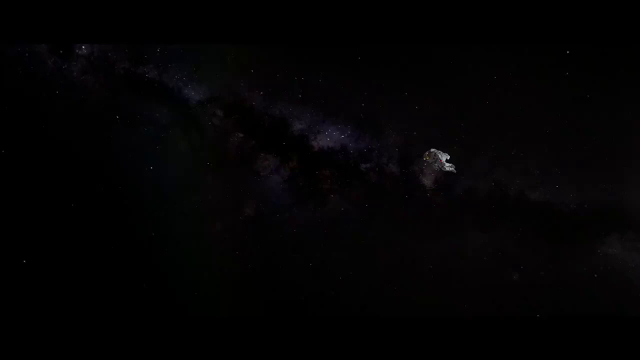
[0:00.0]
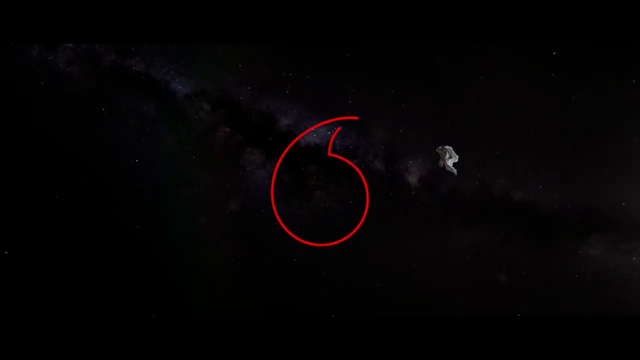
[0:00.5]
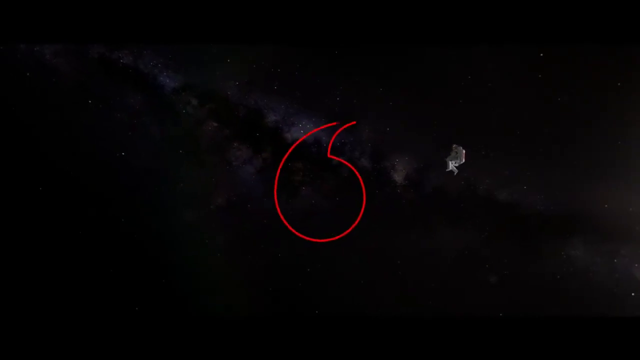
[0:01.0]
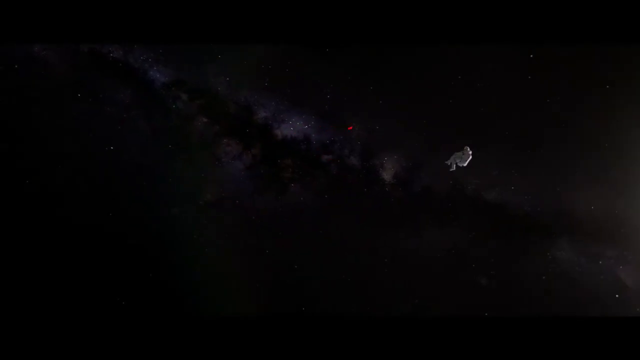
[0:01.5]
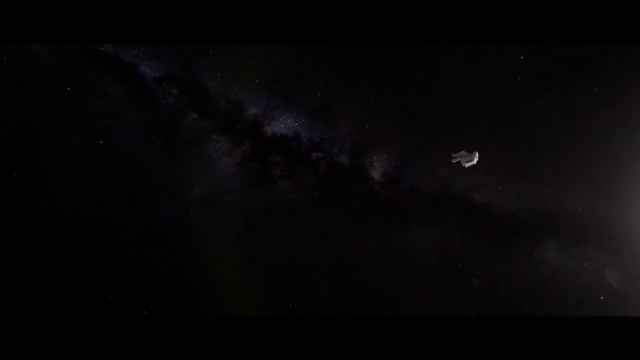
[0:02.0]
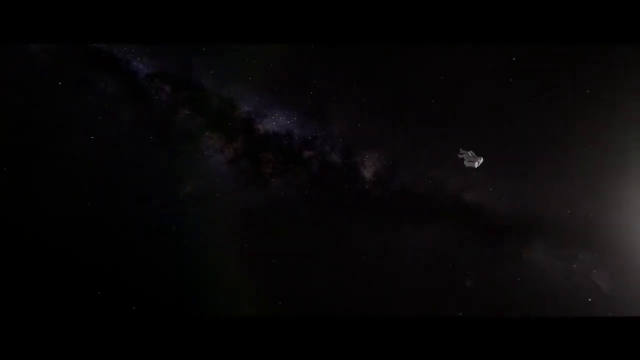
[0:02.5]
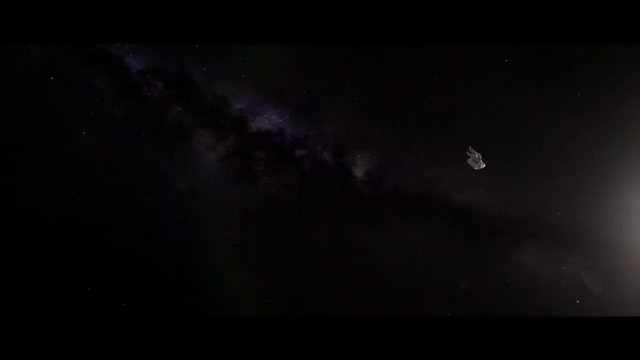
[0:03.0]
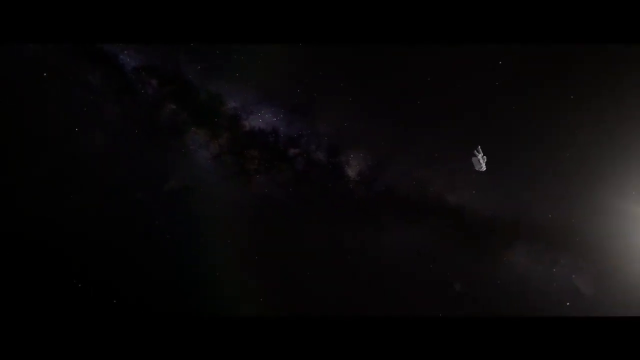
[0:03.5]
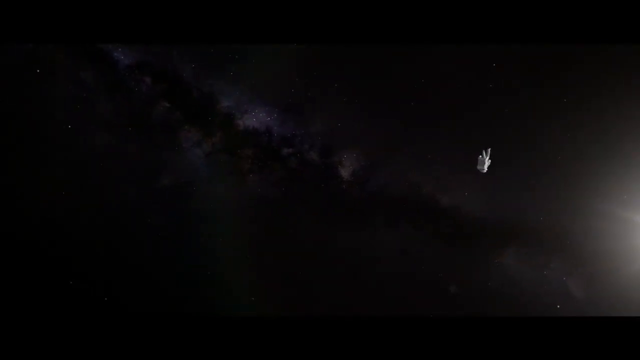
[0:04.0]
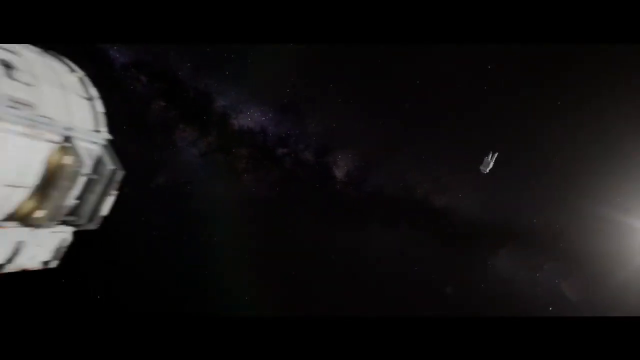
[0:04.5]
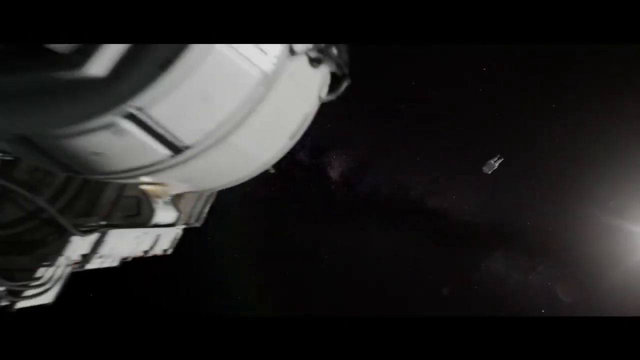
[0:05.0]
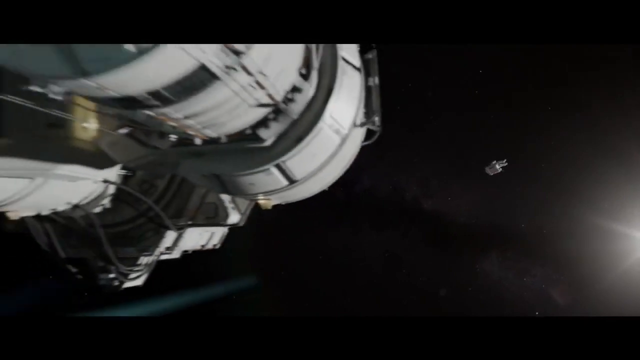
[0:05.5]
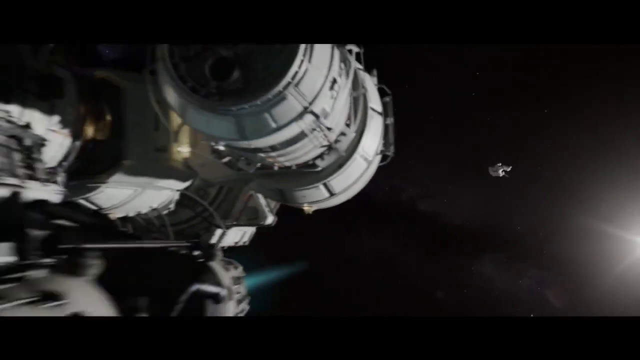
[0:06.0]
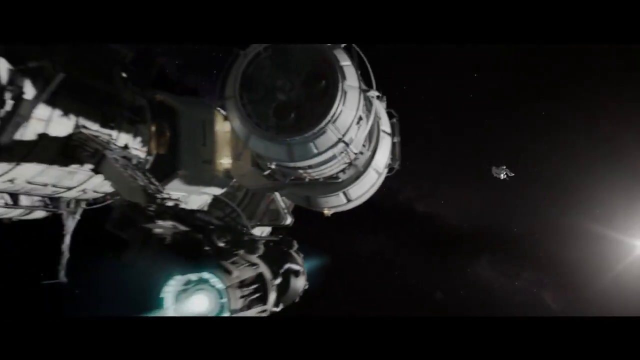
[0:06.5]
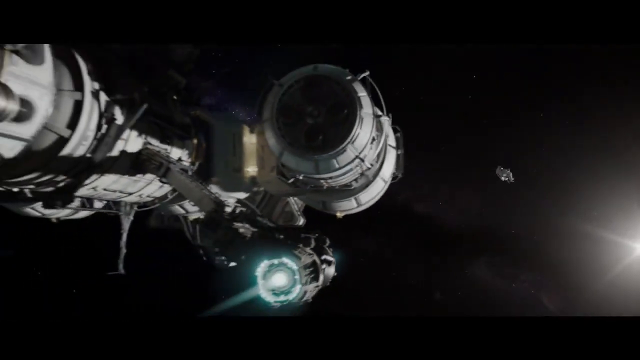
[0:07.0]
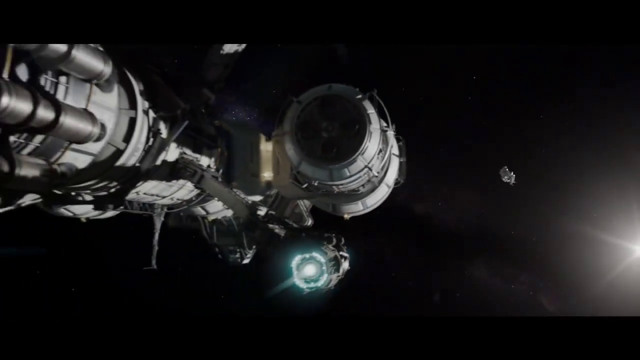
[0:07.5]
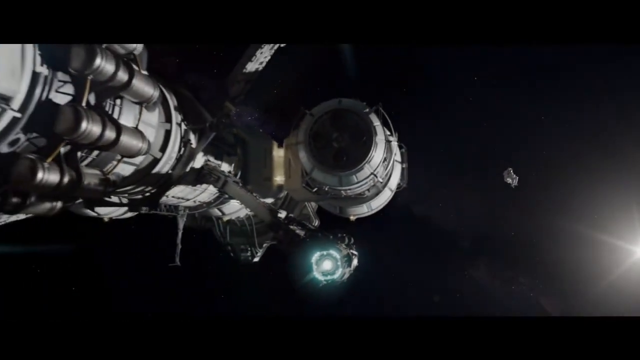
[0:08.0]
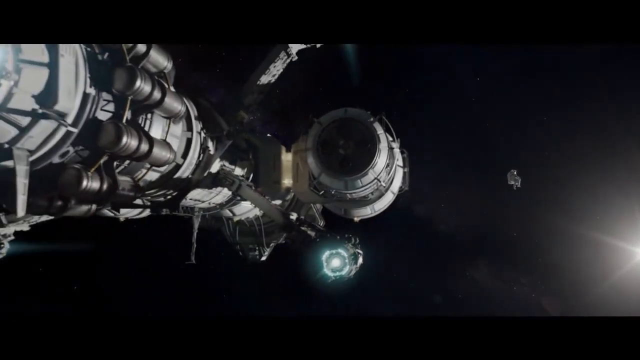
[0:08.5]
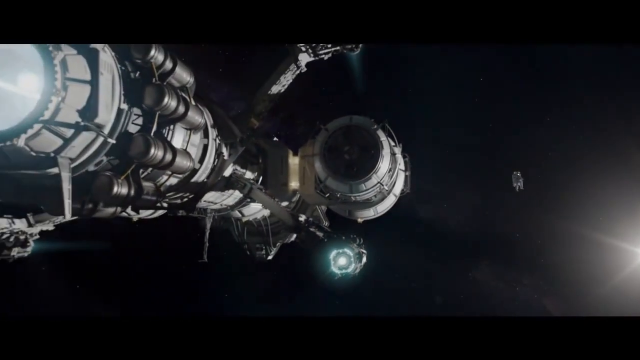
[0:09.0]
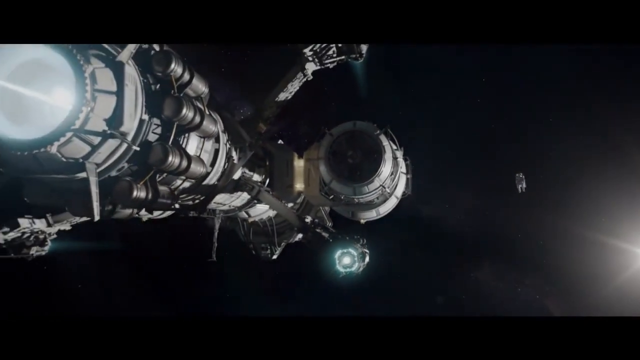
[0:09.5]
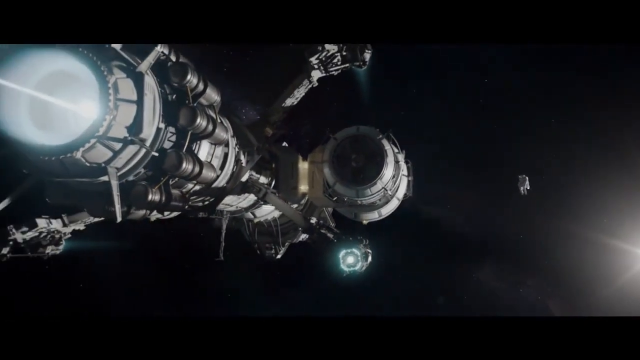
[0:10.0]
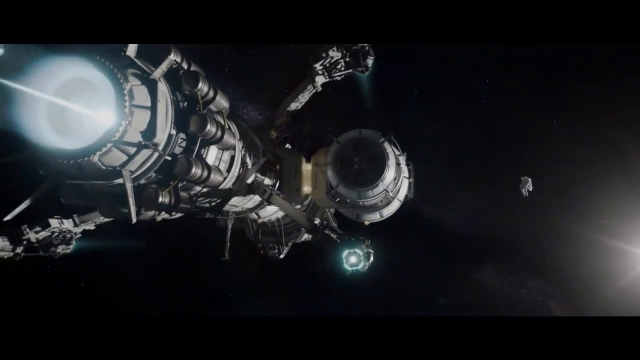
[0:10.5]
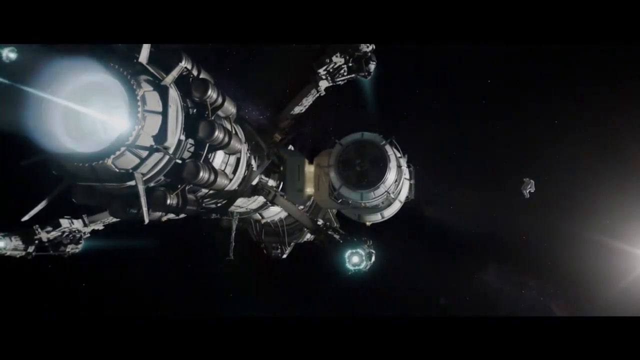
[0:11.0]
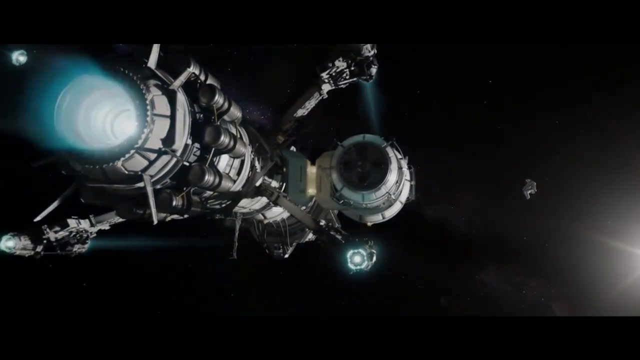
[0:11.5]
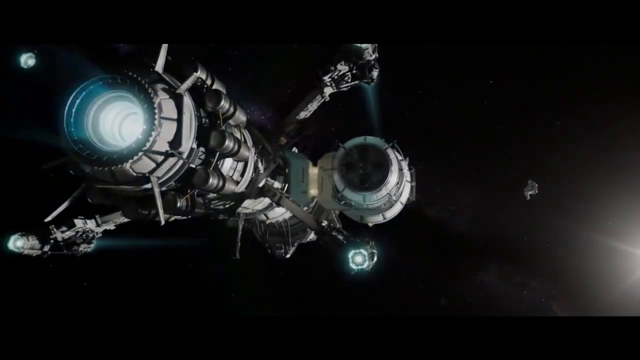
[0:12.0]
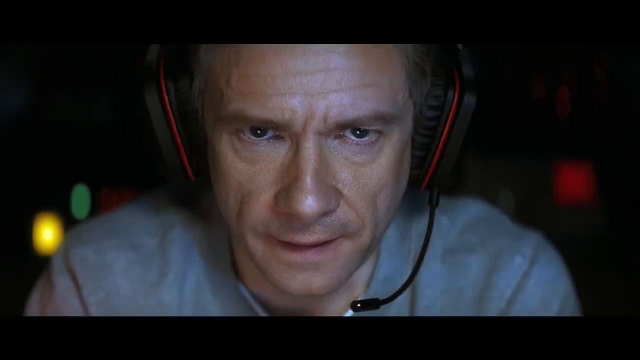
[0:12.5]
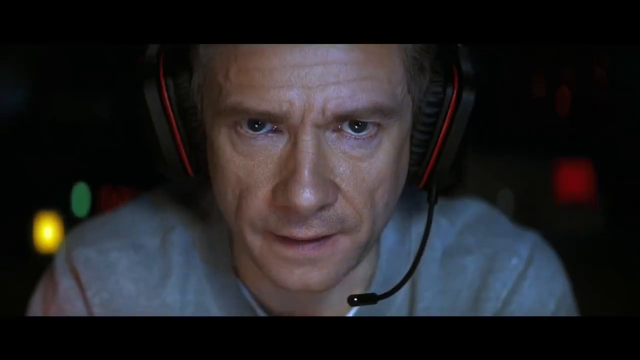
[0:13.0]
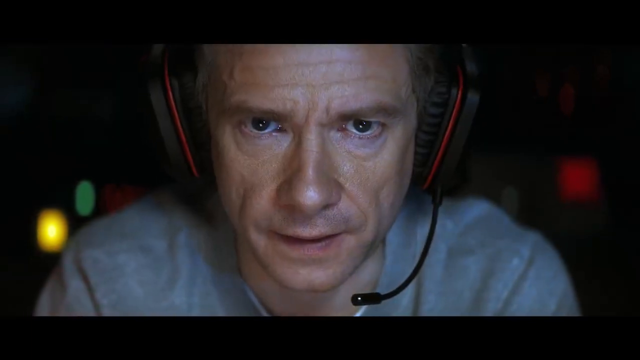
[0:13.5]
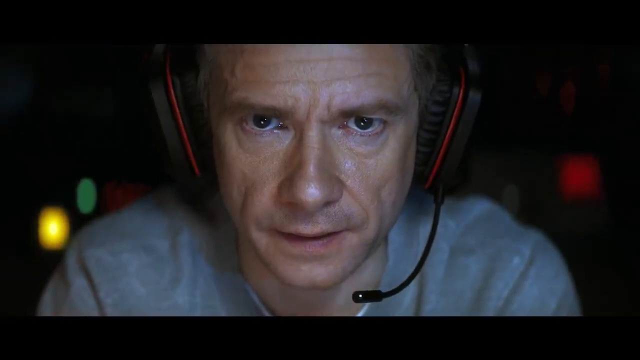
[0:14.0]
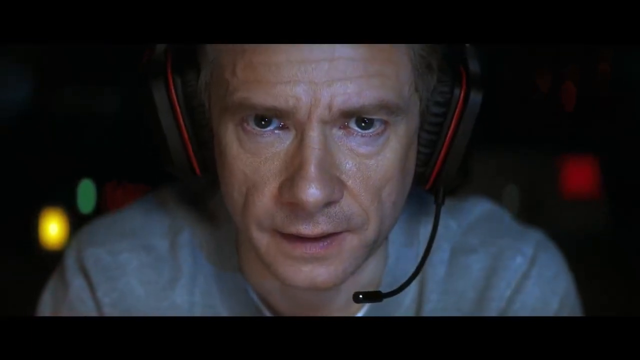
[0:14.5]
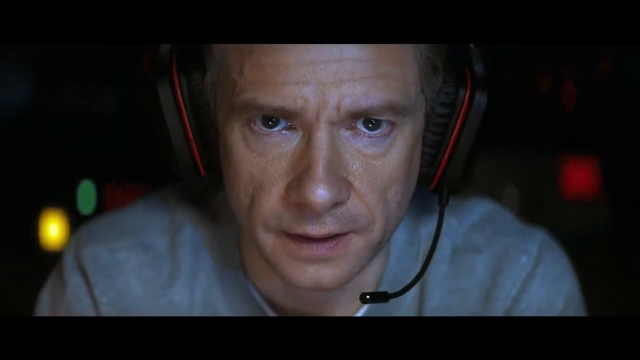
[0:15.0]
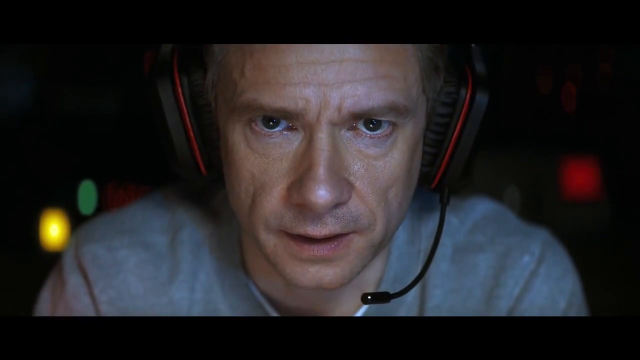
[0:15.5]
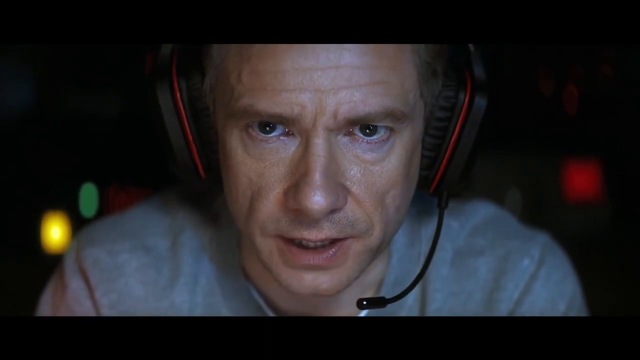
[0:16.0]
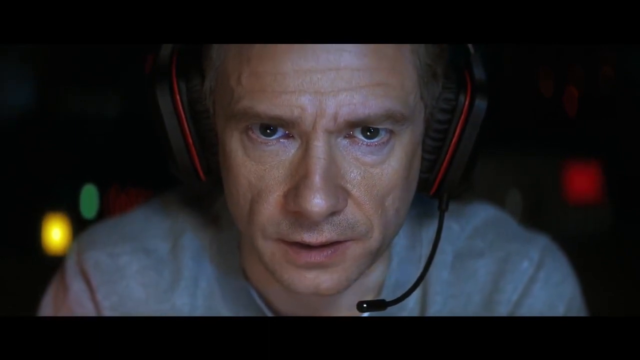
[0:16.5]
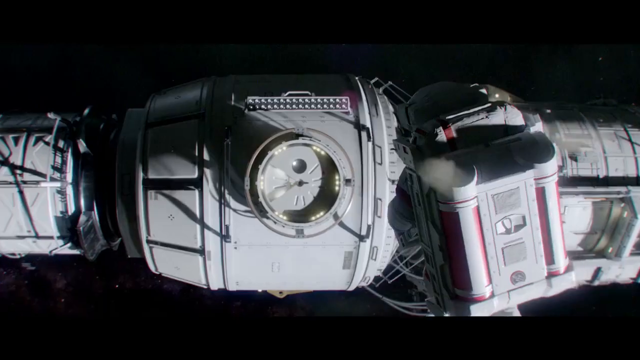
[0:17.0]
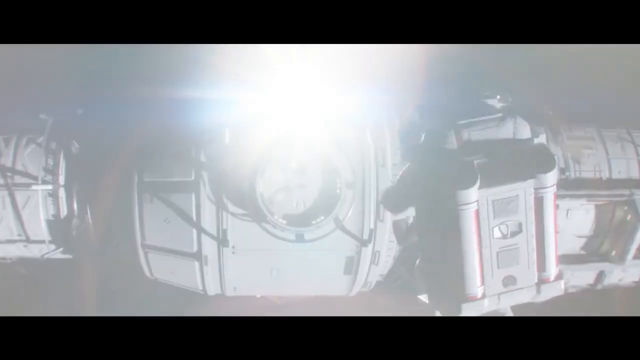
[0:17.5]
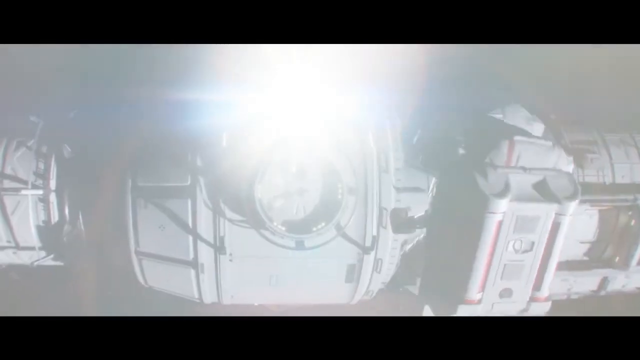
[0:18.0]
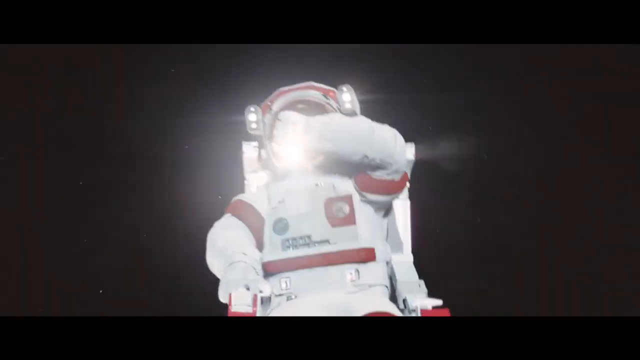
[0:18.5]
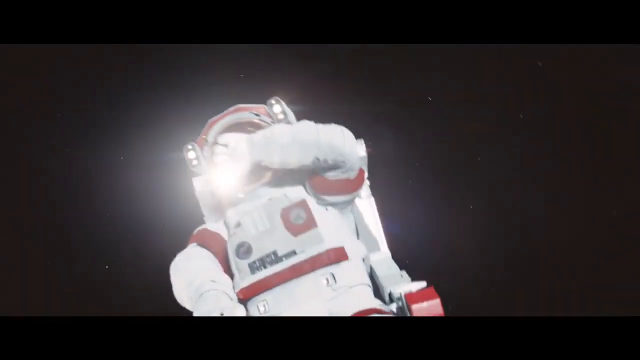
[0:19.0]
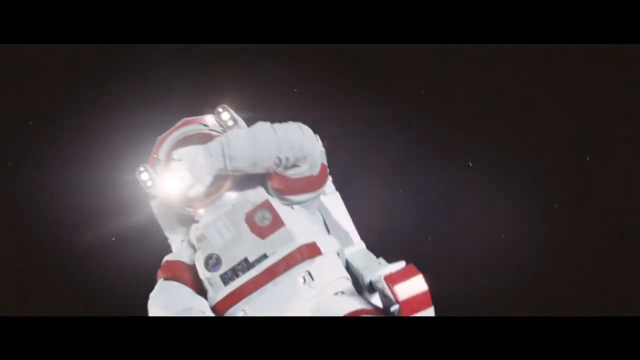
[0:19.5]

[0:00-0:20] A little red streak appears in the center of the frame, moves in a kind of circular motion, and then disappears. What looks like a spaceman flies through space head over heels, going off into the distance. A large spaceship enters from the left side of the screen and moves into the center. A man wearing headphones, with a microphone coming off the headphones in front of his mouth, looks intently straight ahead; he looks like he is sitting at maybe the control center inside a spaceship. A spaceman then floats through space toward the side of the spaceship, and as he gets right next to it, the spaceship emits a bright light into his face and he puts his hands up in front of his face.